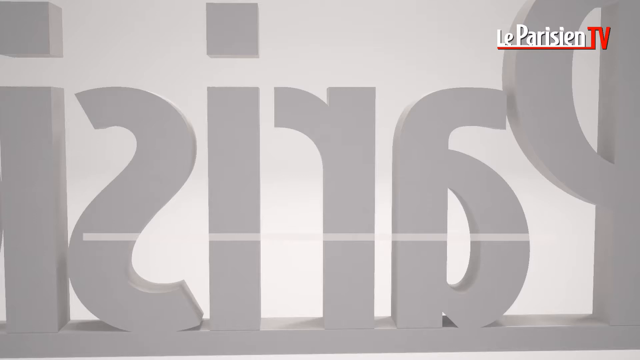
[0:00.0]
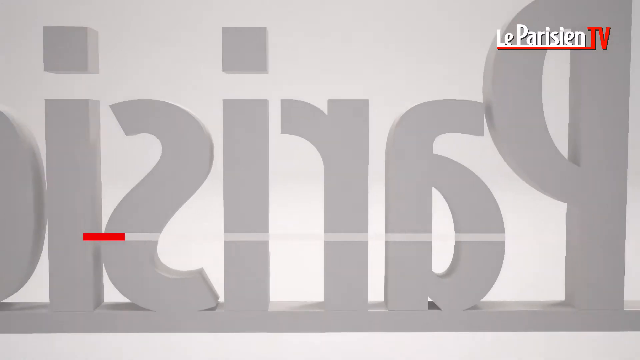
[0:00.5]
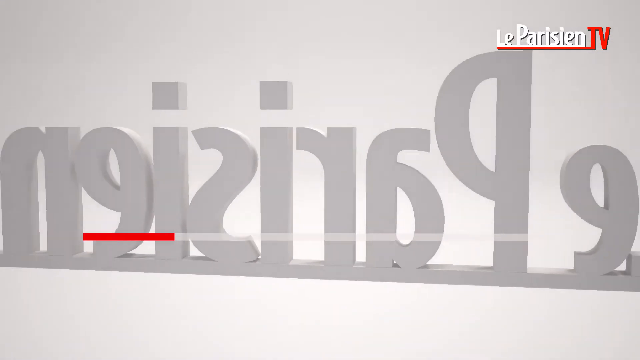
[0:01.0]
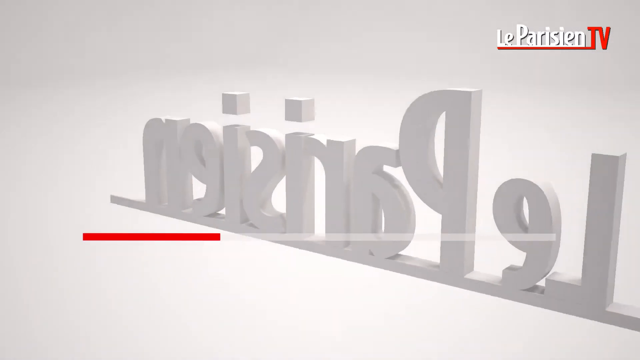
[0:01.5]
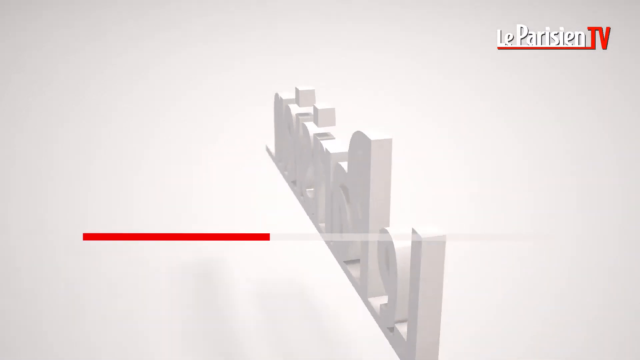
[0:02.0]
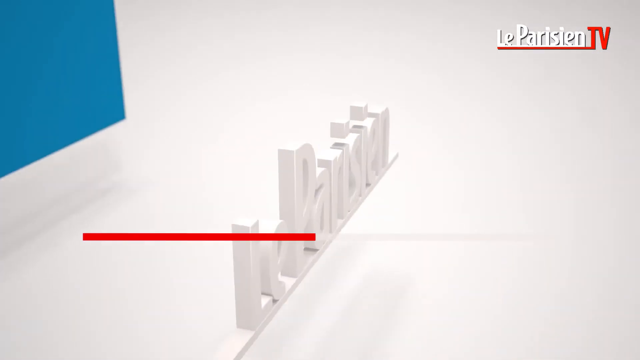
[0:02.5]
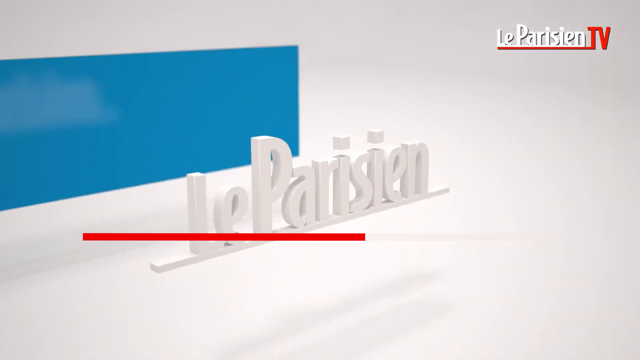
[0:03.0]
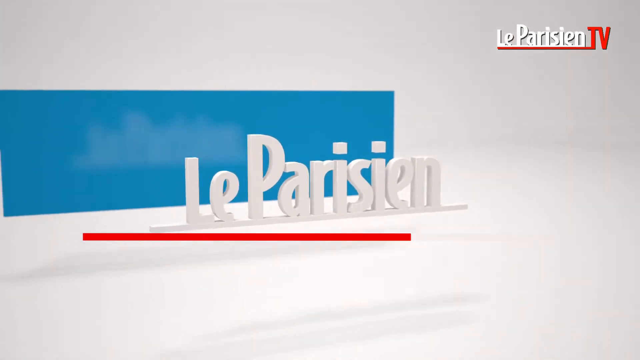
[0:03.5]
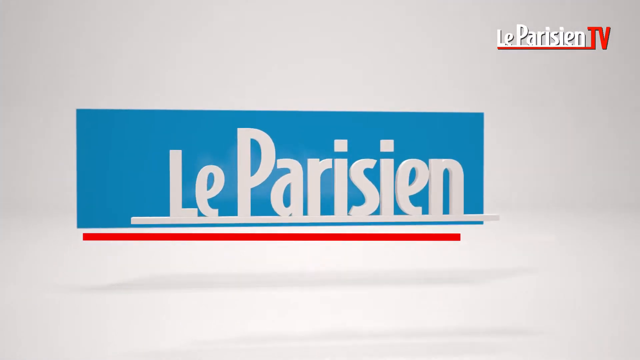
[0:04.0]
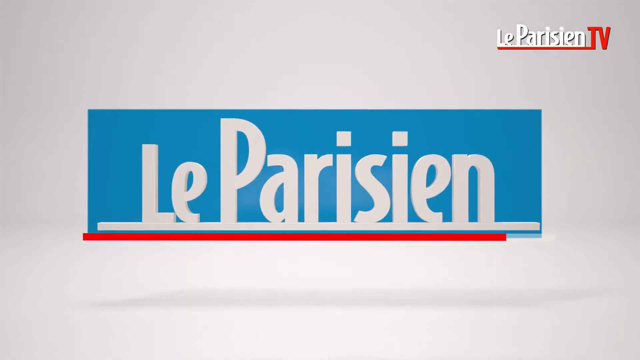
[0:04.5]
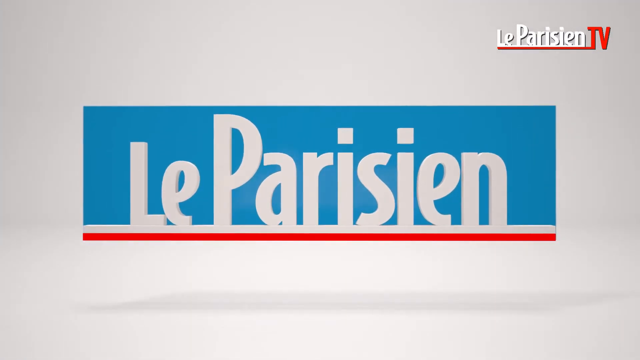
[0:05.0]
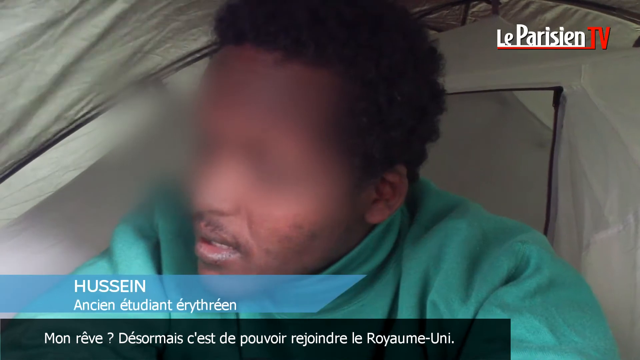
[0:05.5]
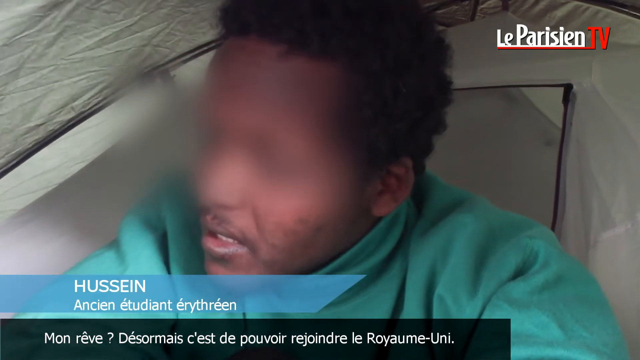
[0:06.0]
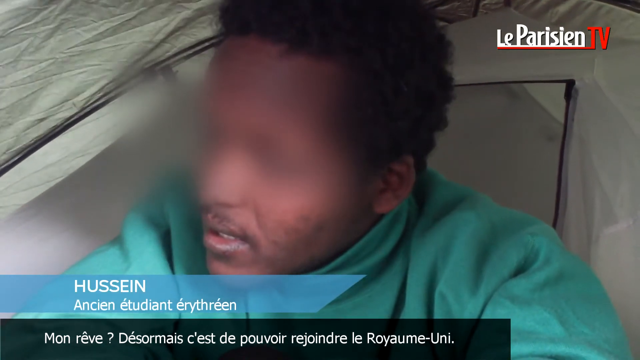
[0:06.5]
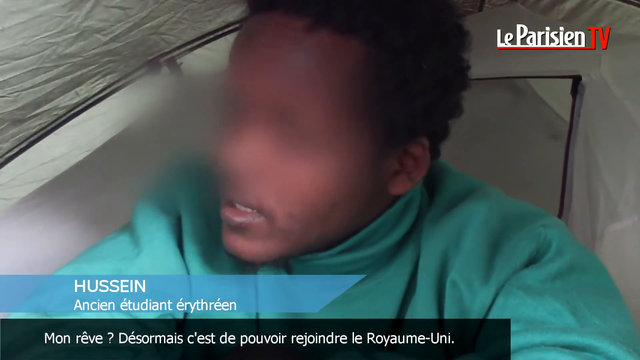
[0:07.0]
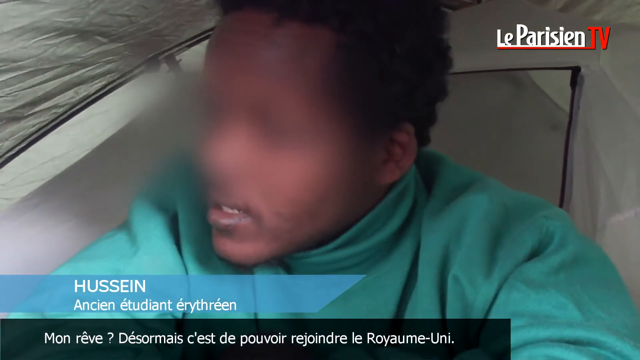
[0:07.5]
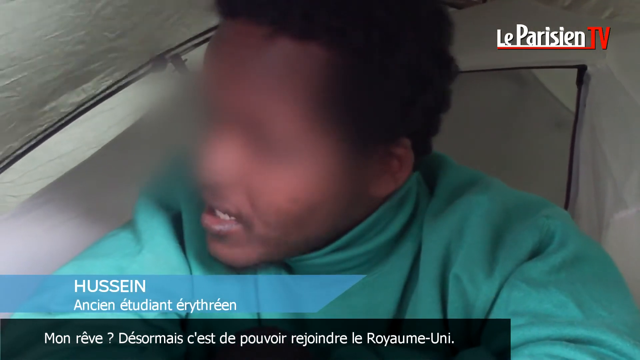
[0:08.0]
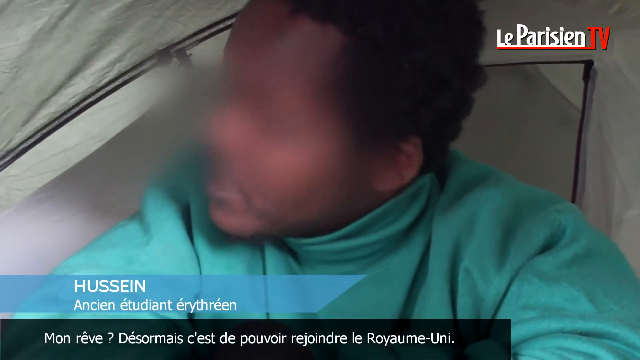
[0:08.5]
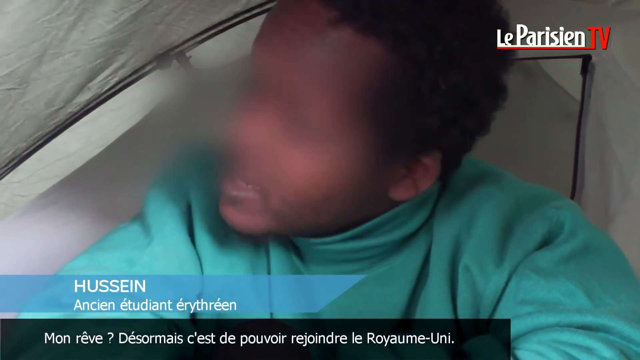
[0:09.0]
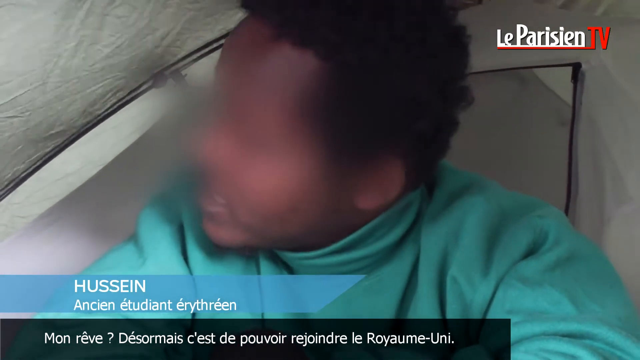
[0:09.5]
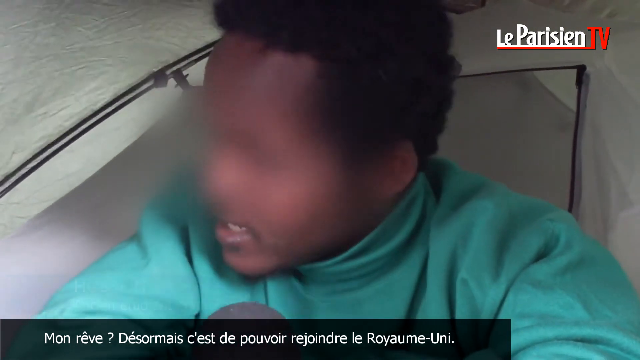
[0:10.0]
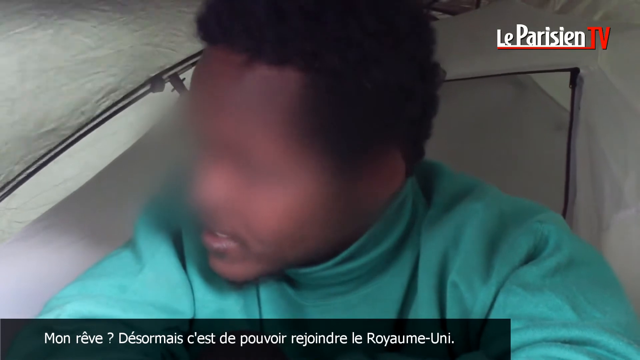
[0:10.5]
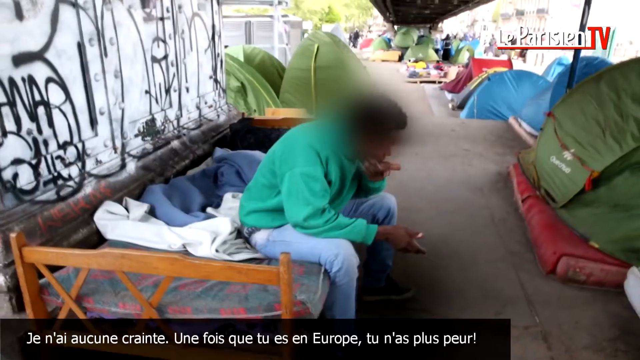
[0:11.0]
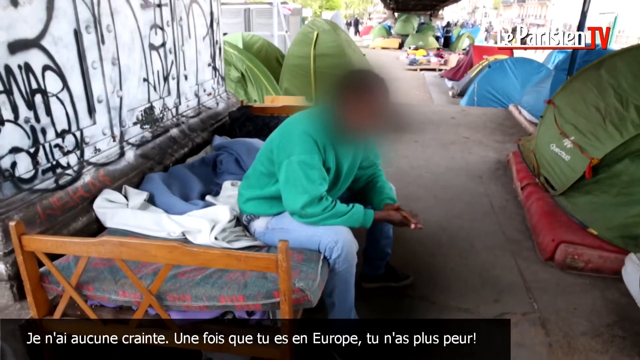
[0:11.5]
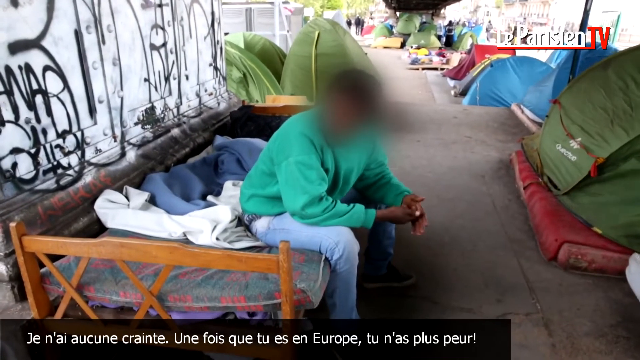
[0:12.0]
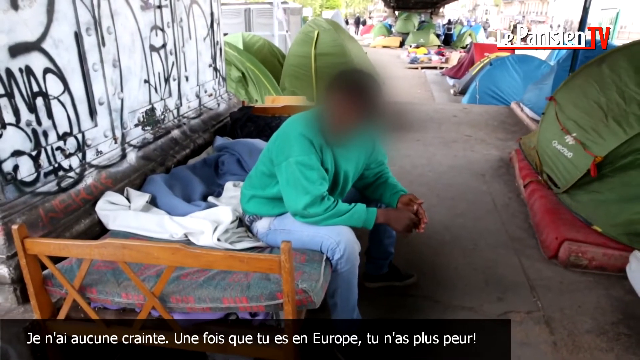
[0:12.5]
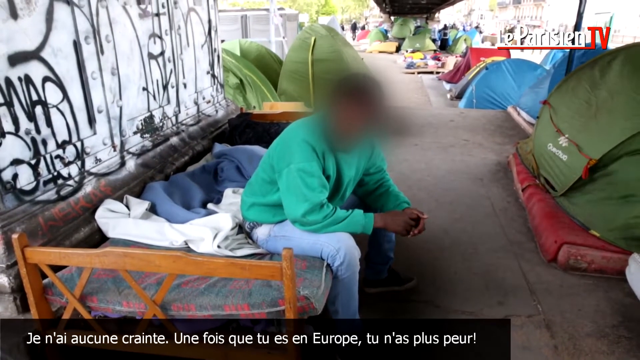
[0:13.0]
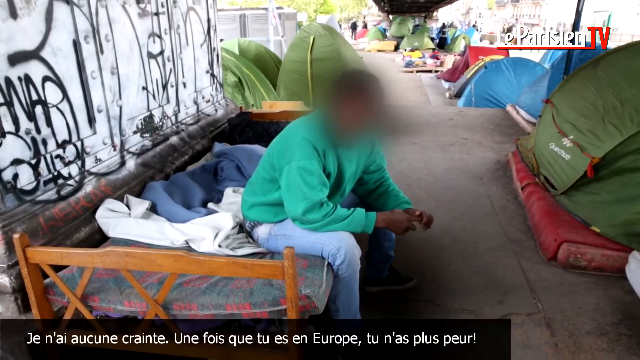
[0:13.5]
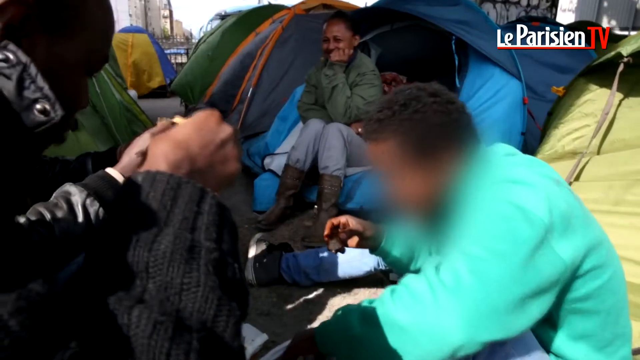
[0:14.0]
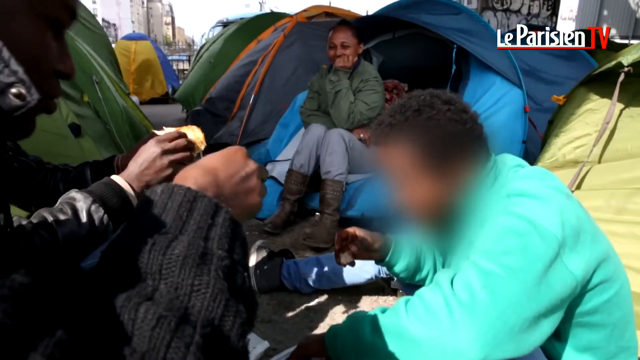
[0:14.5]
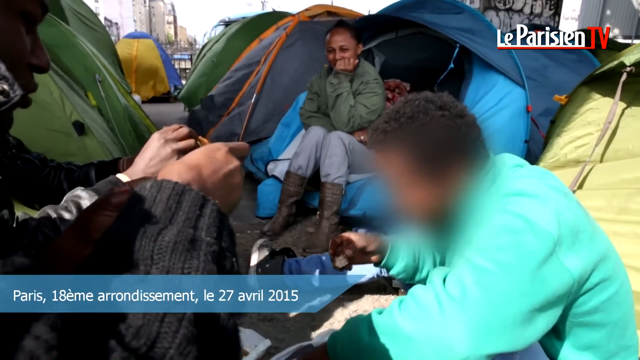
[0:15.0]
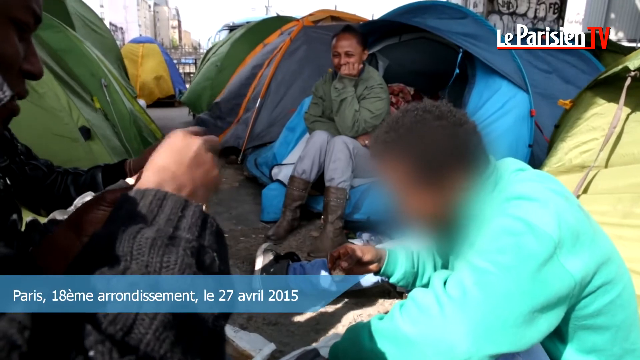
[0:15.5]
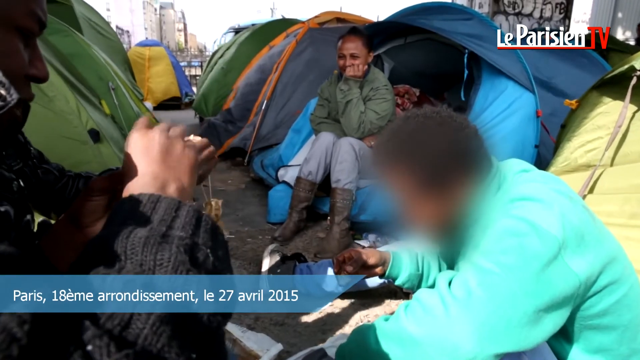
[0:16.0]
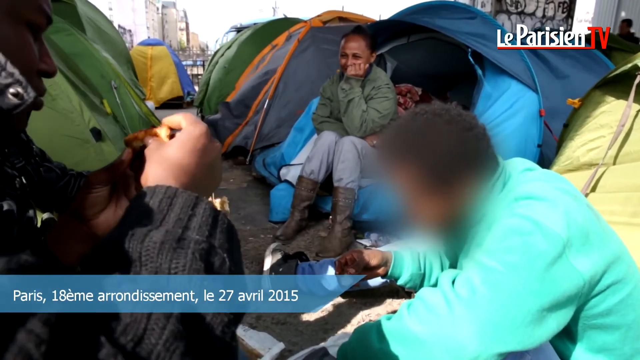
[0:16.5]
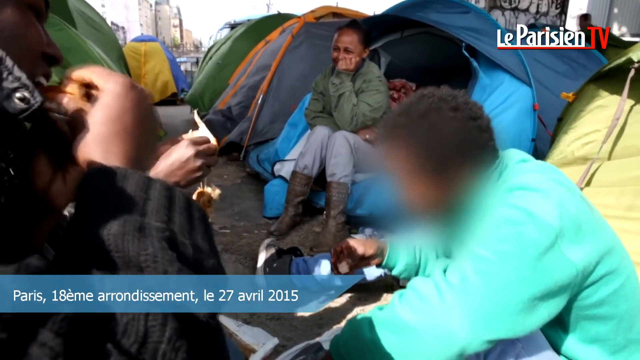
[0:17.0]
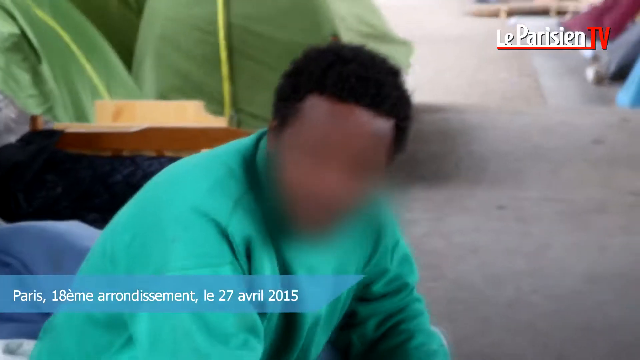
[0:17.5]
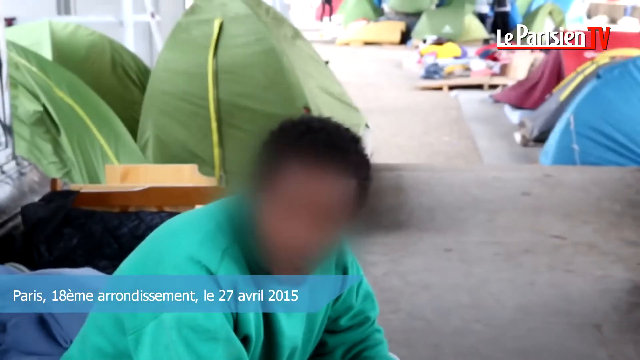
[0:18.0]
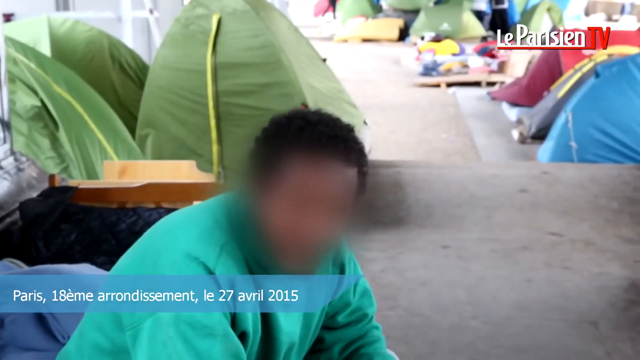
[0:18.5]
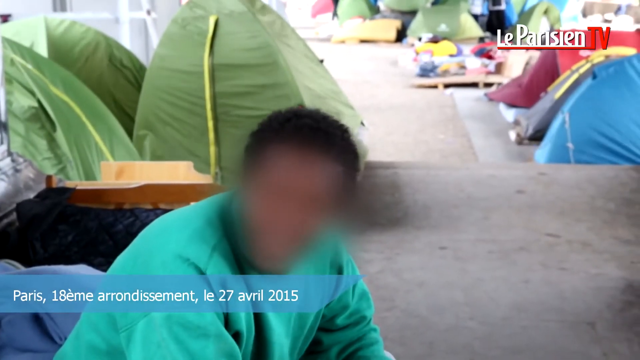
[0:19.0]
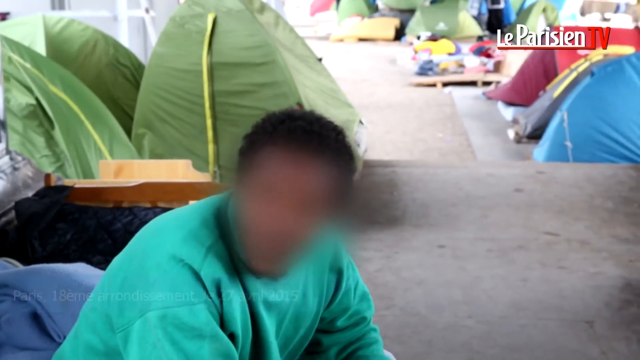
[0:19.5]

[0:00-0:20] The video opens on a white background with "Le Parisien TV" at the very top right. In the middle is a blue rectangular box with a red and white line right under it, and "Le Parisien" appears in white in the middle. The scene changes to a man named Hussein whose eyes are blurred out; from his face and hair he appears to be of African-American descent. He seems to be sitting inside a tent, wearing a teal coat, with curly hair, and he seems to be in very rough shape. In the next shot he is sitting on a bed made of wood with a slight mattress on it. Behind him are a lot of other tents, and he is clearly outside; he might possibly be homeless. There is a lot of graffiti and many drawings on a kind of metal-like wall, possibly with a curb, though those details are hard to tell. In front of him is a green tent, and to its left are a blue one, a red one and a yellow one. In the distance are tens of tents. The man sits on his bed, holding his hands together. The next scene shows him eating and talking to somebody while two people are in front of him; another person sits in a blue tent to his right, and another person to his left is eating. The scene returns to him sitting on the bed.